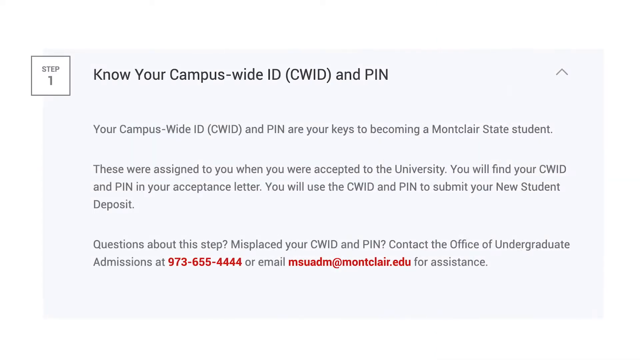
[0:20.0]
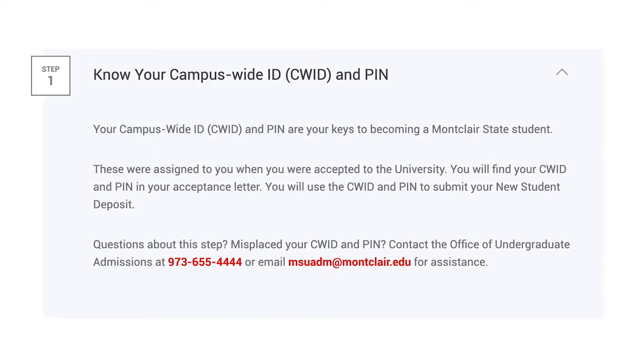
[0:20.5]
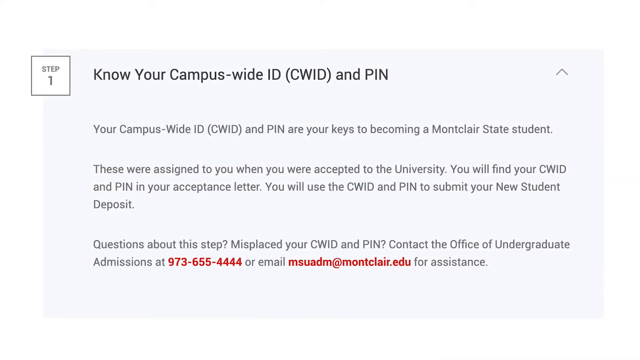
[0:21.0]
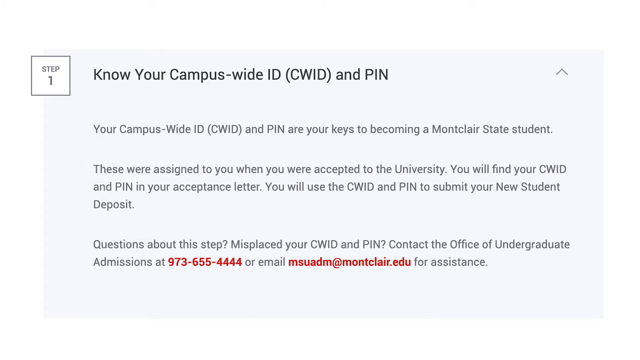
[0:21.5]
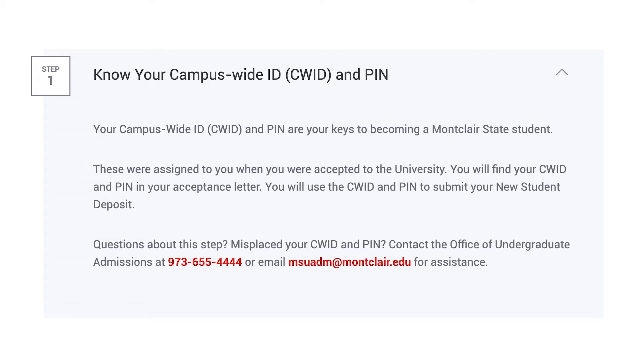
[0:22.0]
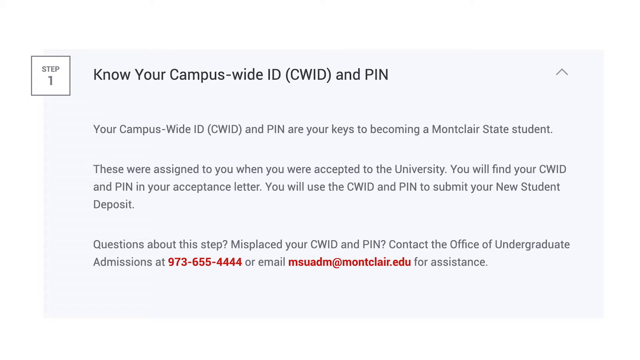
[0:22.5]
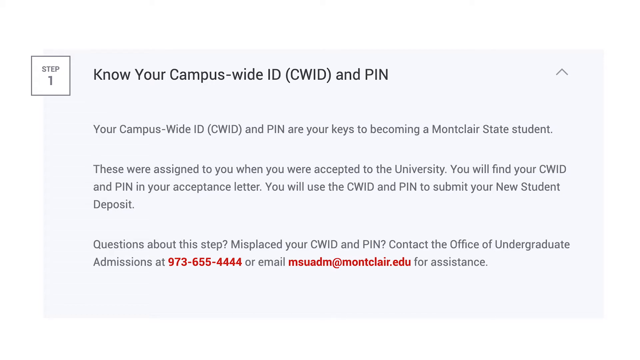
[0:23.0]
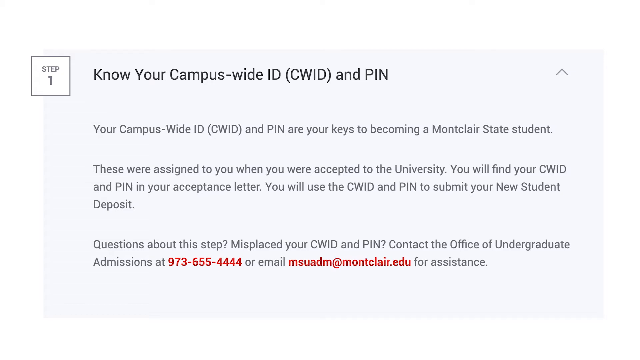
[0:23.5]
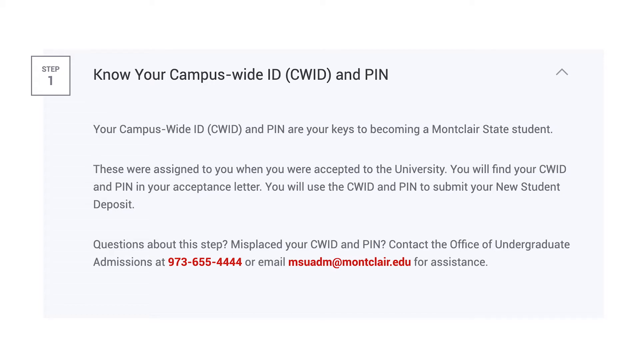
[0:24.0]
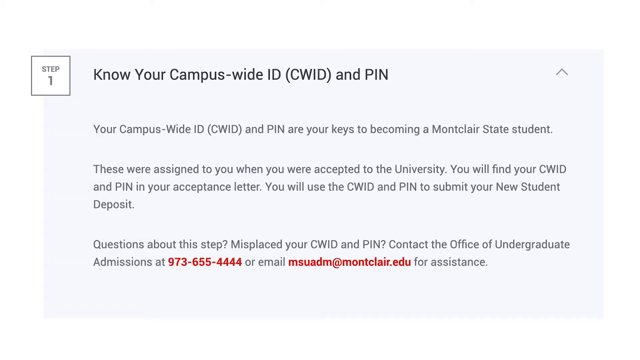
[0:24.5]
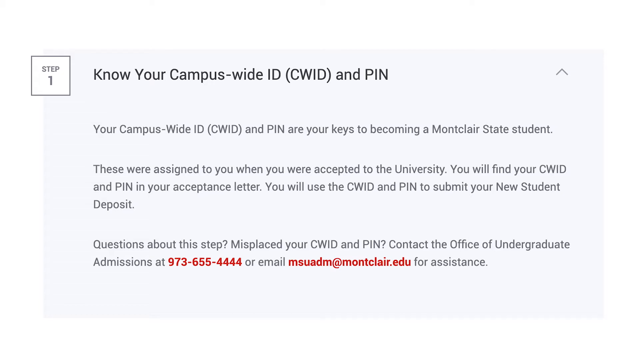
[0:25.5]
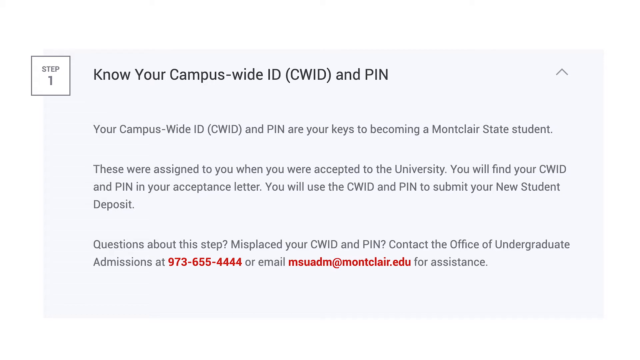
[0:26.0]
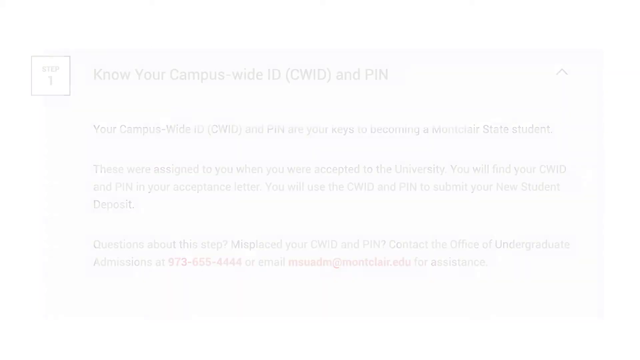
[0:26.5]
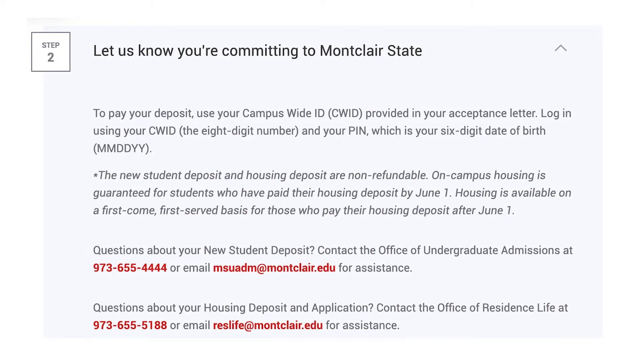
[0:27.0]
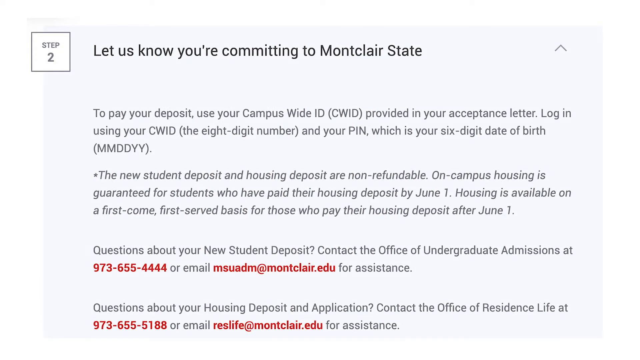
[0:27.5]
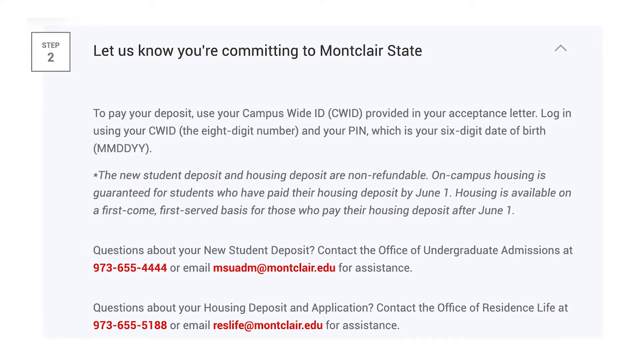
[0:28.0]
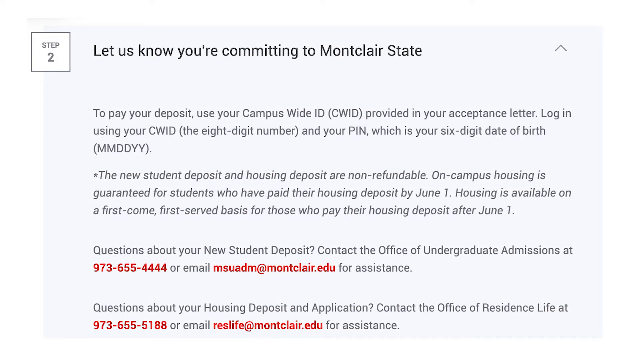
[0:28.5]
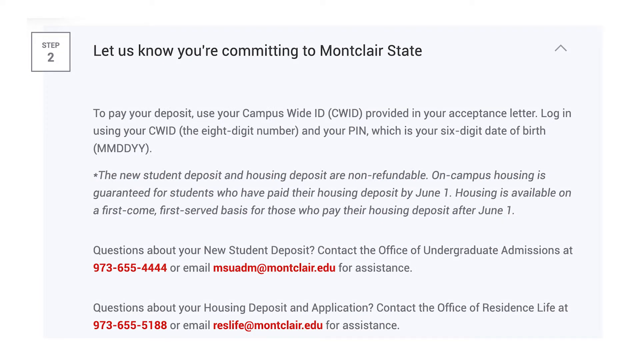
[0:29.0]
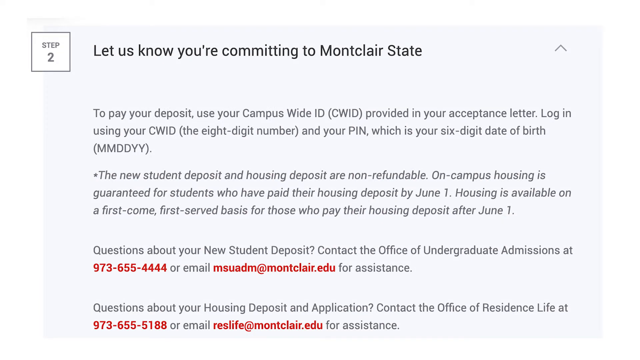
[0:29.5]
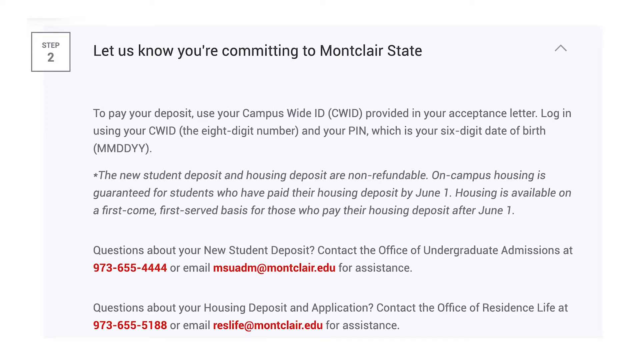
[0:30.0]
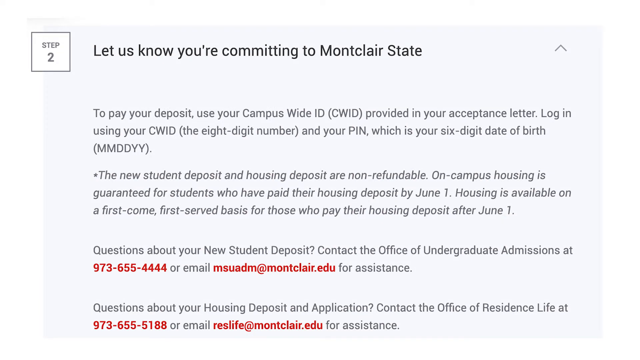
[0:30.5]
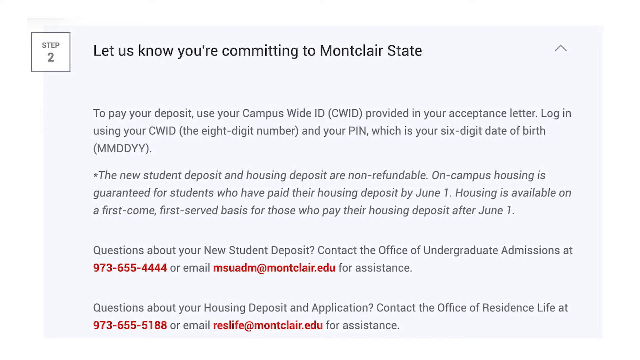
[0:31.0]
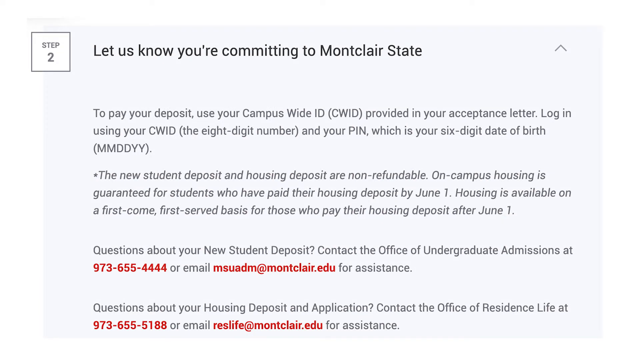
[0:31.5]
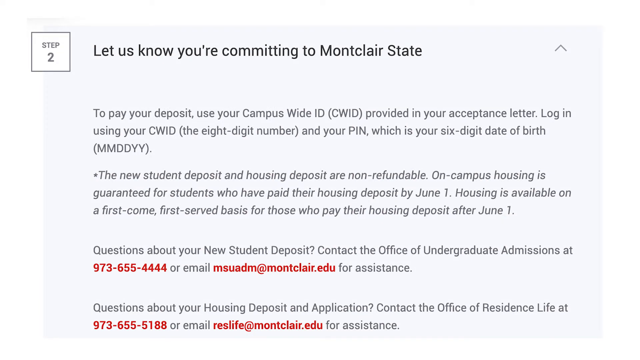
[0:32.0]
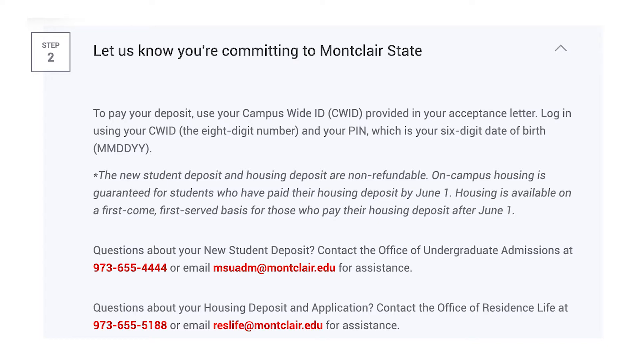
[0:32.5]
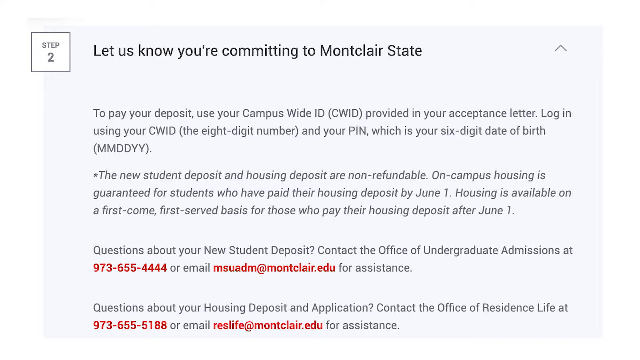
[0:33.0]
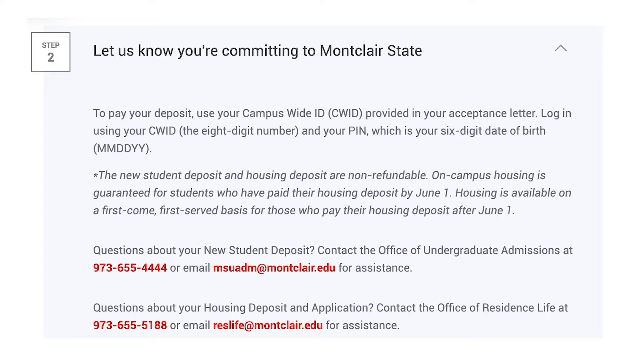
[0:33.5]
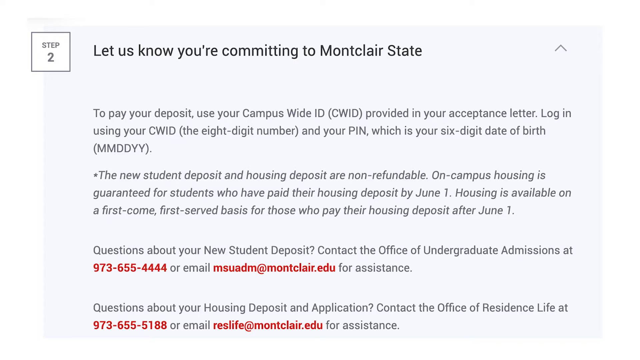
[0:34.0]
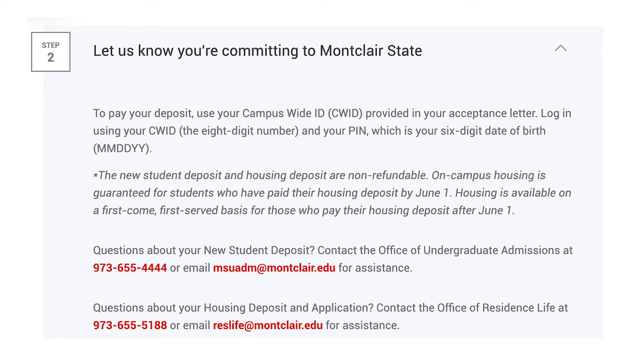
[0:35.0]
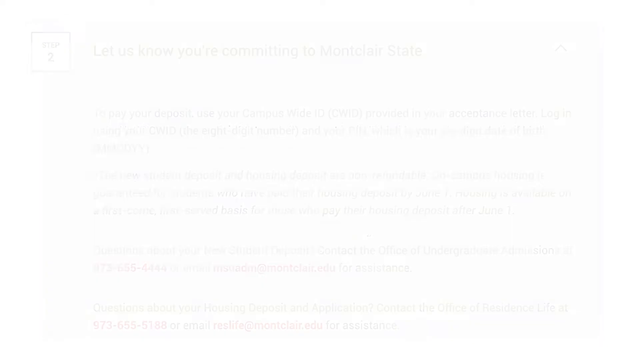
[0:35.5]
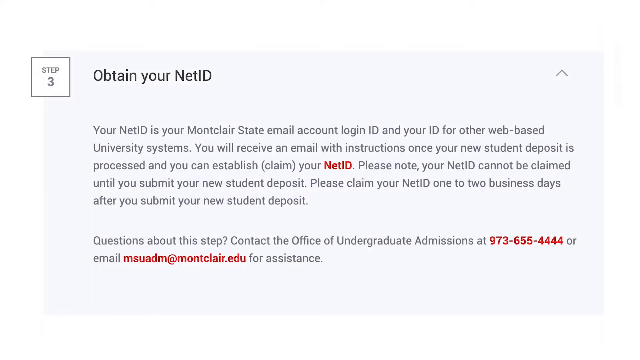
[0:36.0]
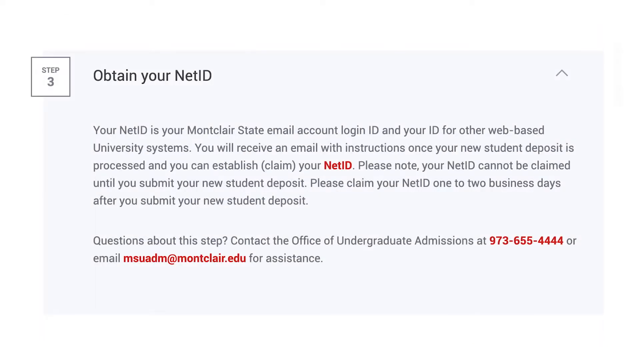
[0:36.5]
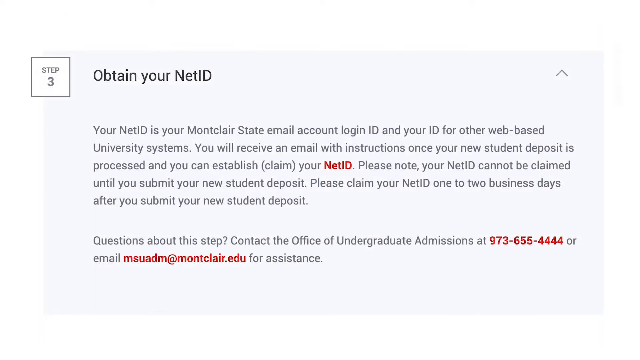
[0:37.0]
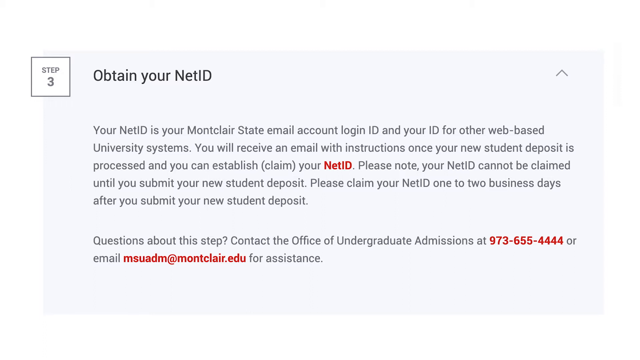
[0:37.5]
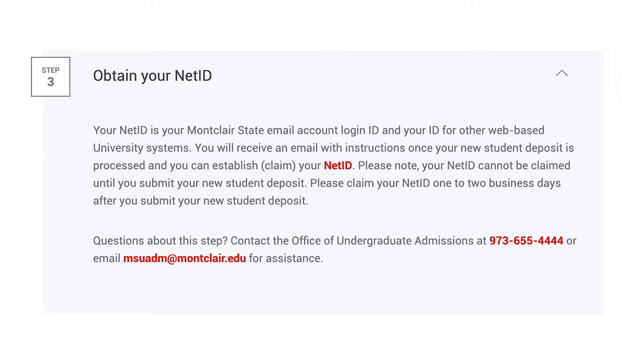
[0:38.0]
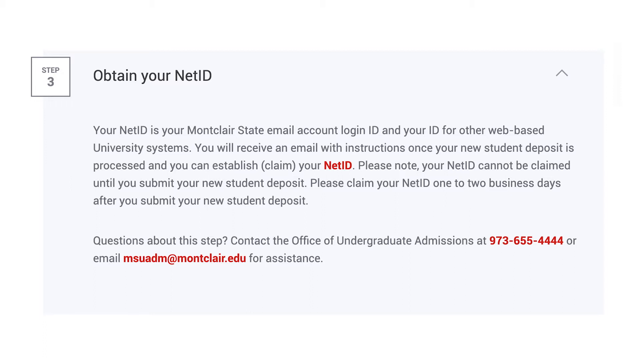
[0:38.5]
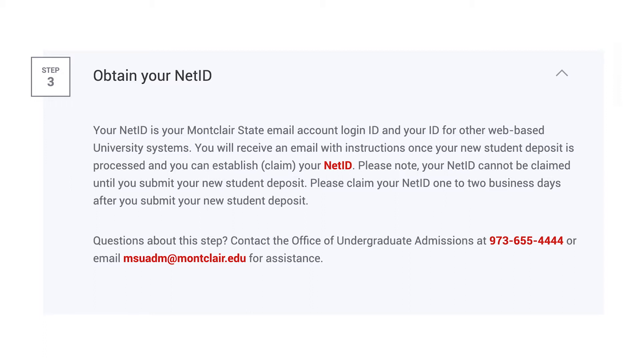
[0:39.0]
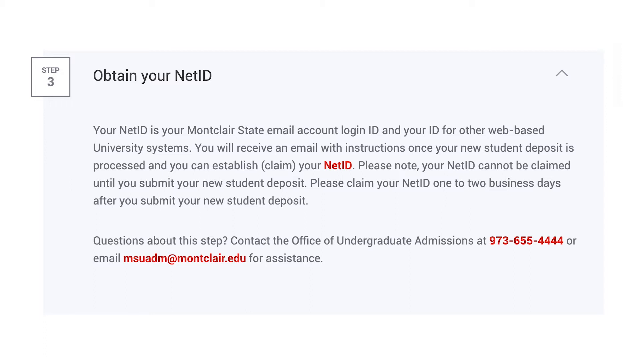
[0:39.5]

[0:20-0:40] The video continues through the steps to join Montclair State University with Step 2, about officially accepting the university. Students need to pay a new student deposit using their campus-wide ID and PIN, which is their birth date, and students who want to live on campus can also pay a housing deposit at the same time; on-campus housing is guaranteed if the deposit is paid by June 1st. Step 3 then appears on the screen, about getting a net ID: after paying the deposit, students receive an email with instructions to set it up, and the video says this ID gives access to the student's university email and other online tools. Contact details such as phone numbers and email addresses are shown throughout the video.